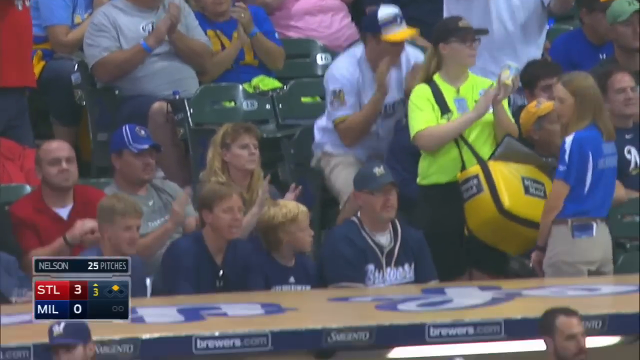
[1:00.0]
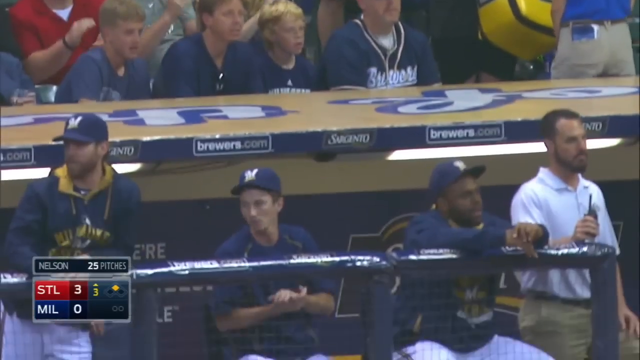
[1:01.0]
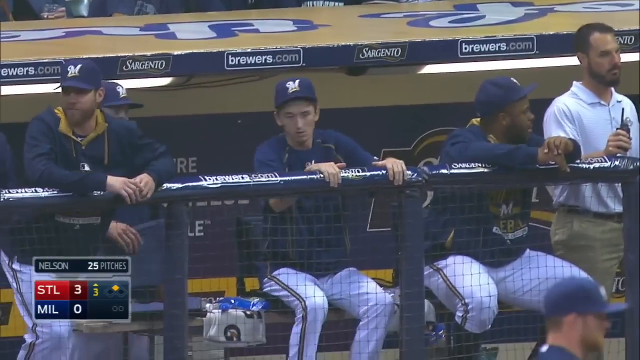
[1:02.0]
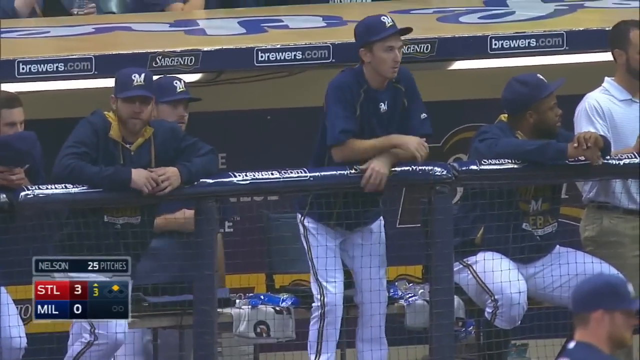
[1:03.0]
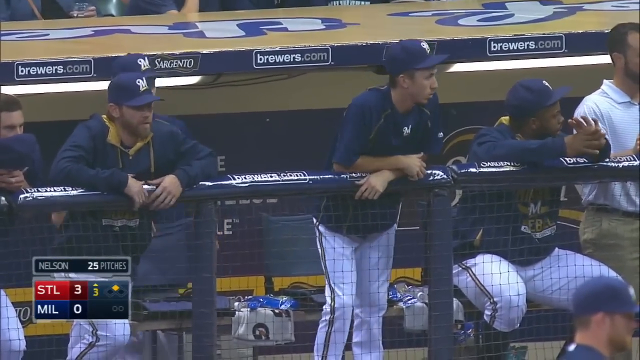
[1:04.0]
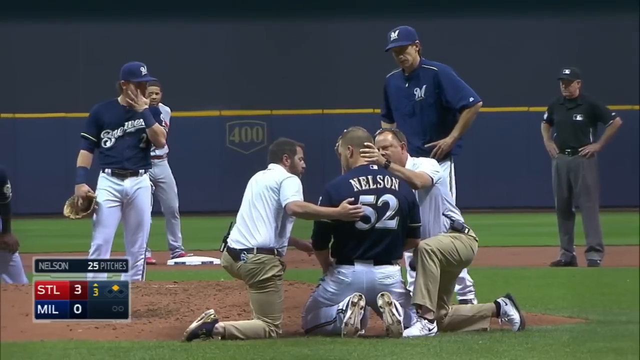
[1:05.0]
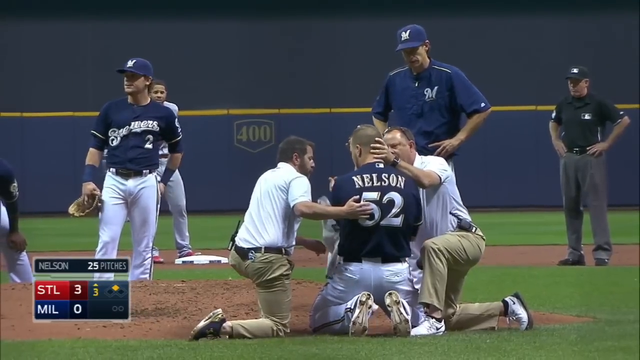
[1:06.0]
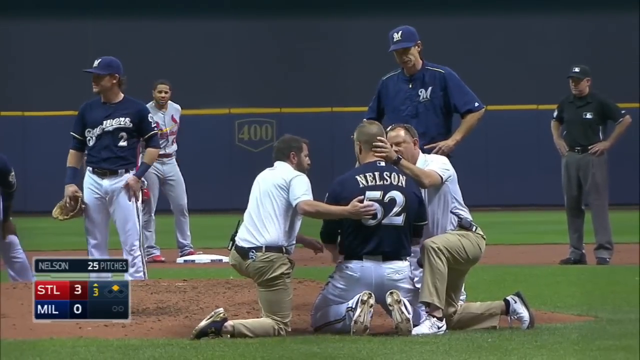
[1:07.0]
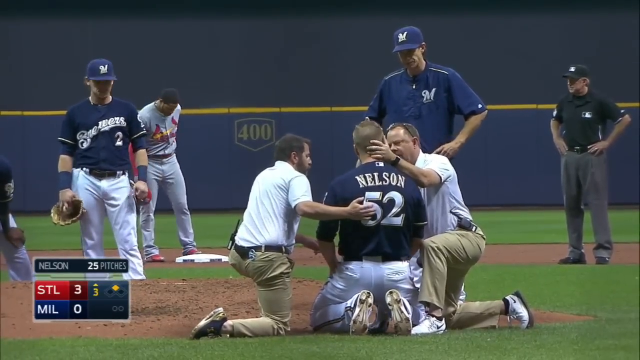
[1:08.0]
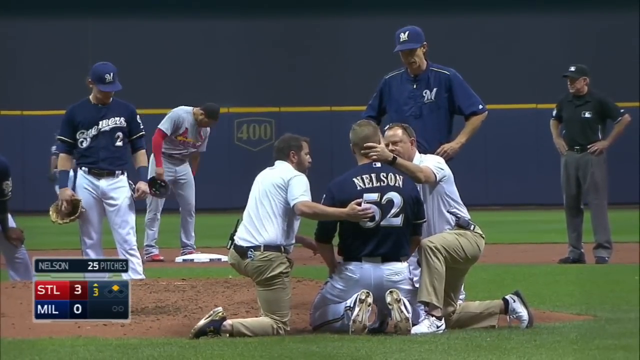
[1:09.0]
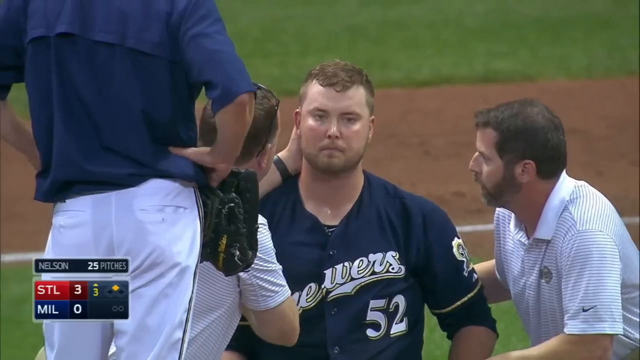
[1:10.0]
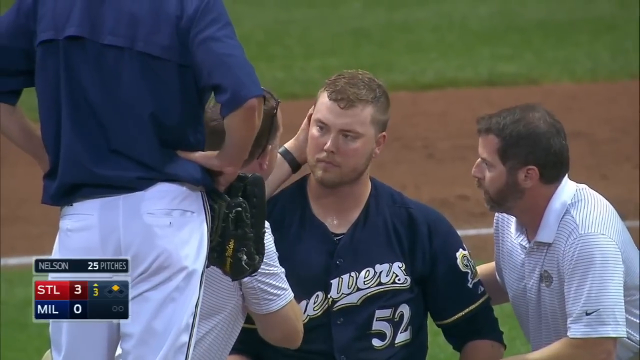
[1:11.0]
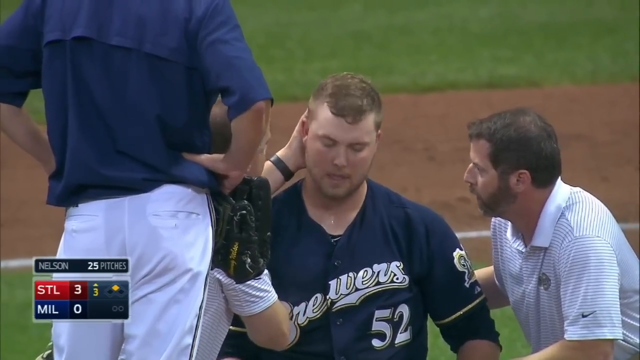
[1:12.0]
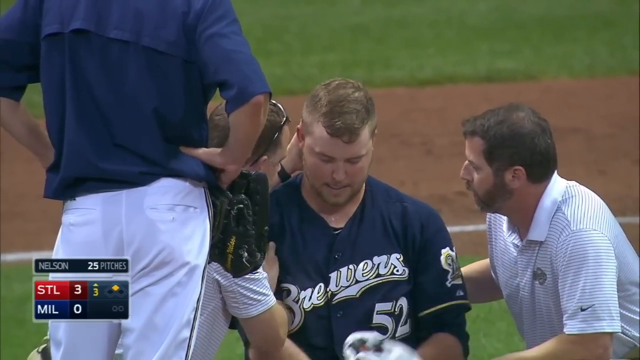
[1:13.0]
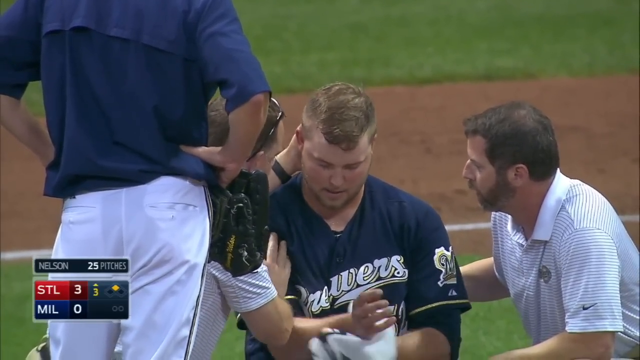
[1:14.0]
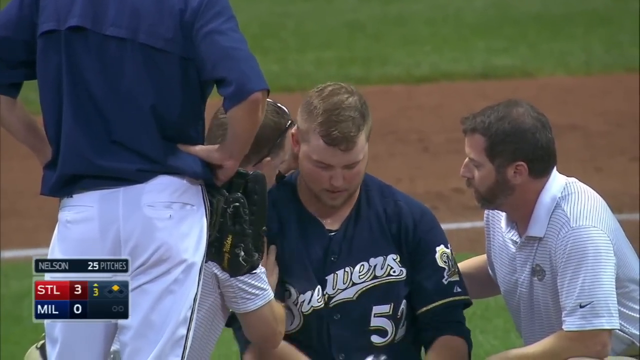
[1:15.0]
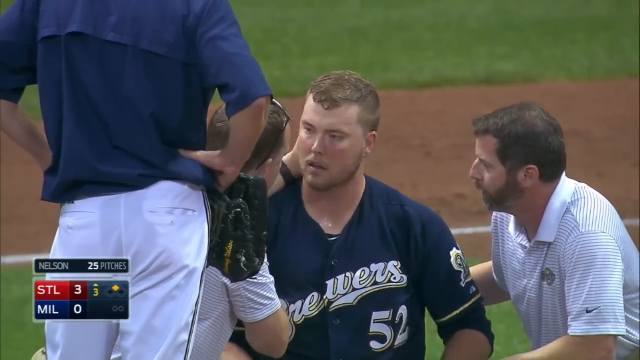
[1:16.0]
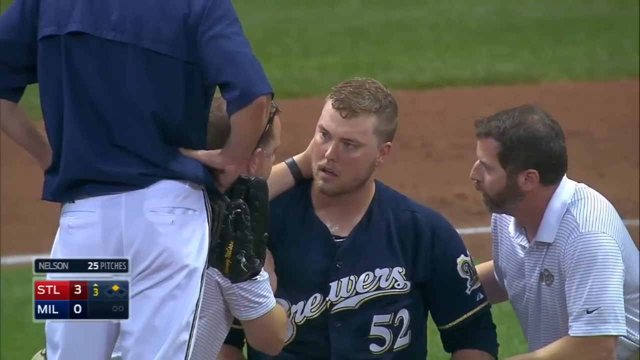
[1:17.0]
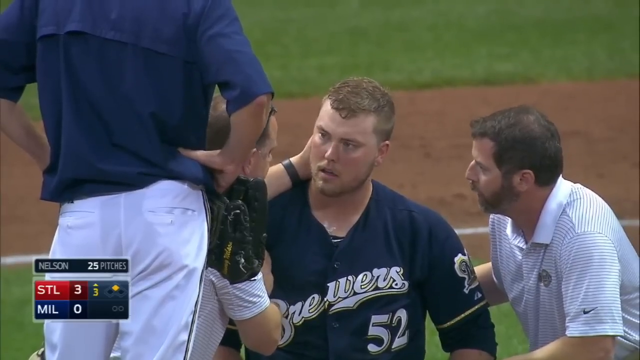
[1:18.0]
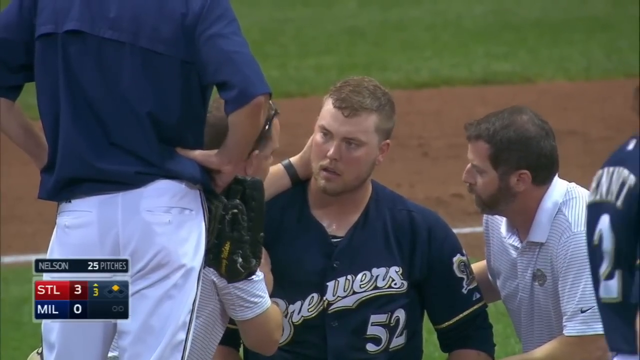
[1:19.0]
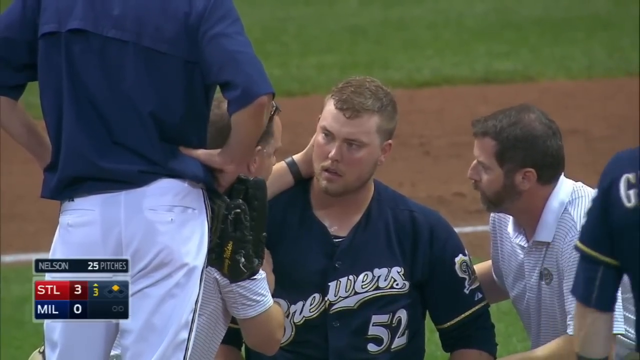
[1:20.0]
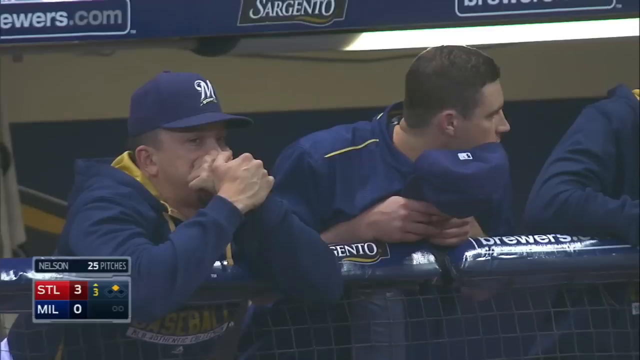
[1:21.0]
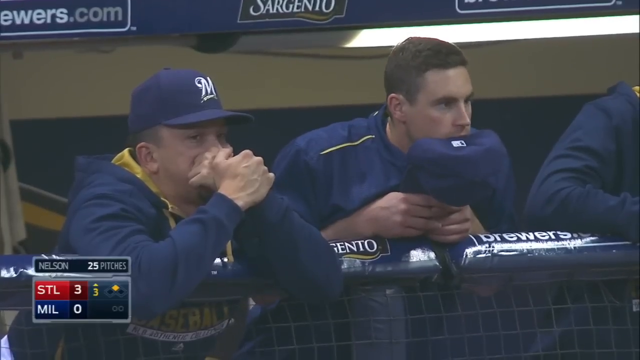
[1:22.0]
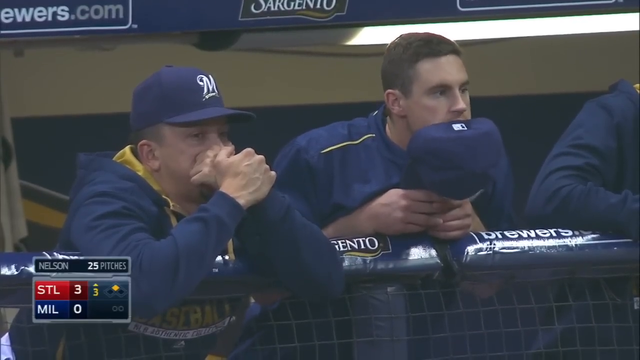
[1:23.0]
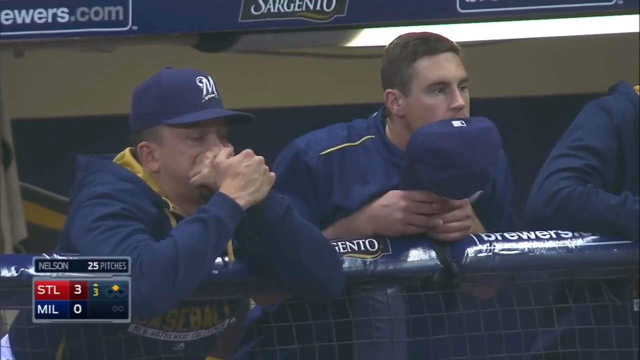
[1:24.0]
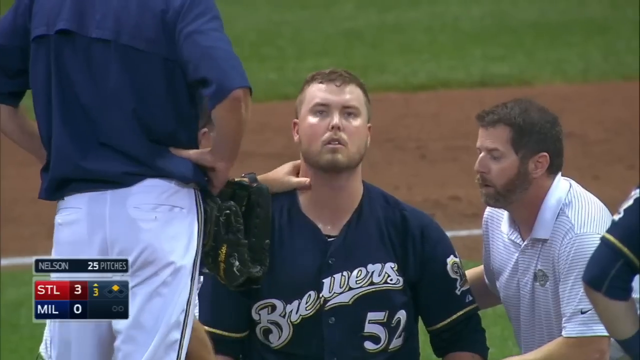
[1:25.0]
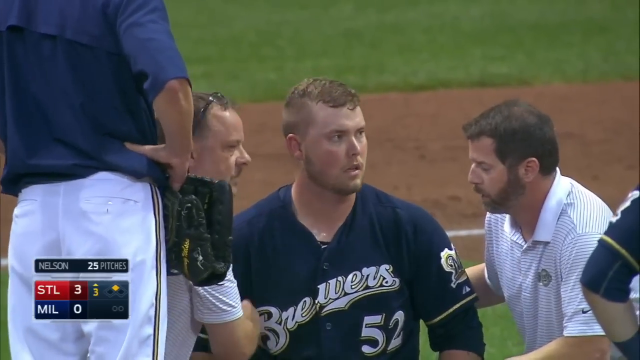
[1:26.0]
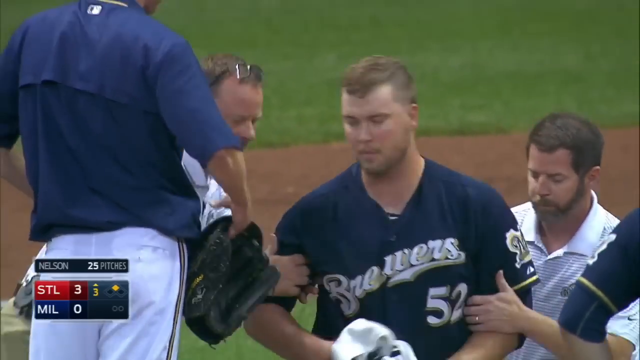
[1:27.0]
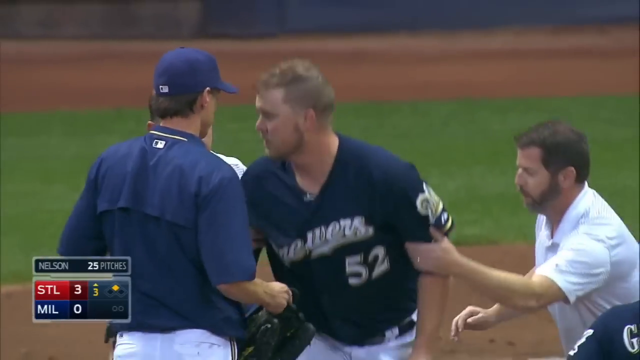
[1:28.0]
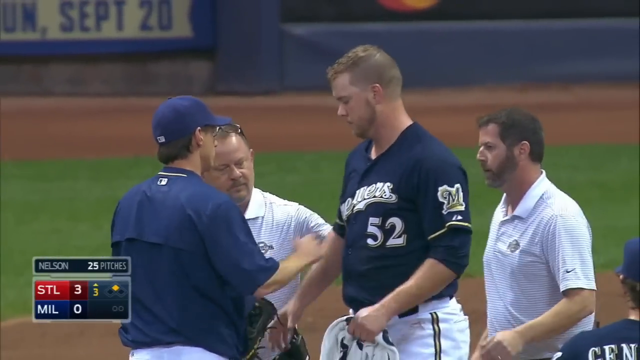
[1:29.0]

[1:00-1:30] Fans behind one of the dugouts are shown; a concession worker in a fluorescent yellow shirt stands and claps as Nelson rises to his knees. The camera pans down into the Milwaukee dugout, where the players look relieved. Nelson is still kneeling, facing away from the camera, with his spikes visible and a trainer on either side of him. The trainer on his left holds his right hand on the number five on Nelson's back, and the trainer on his right holds his left hand on the back of Nelson's head, while umpires, coaches and players mill around looking concerned. The trainer on the right speaks to Nelson, and then Nelson's face is shown for the first time: he has sandy hair and a small goatee and looks a bit dazed, but his eyes track the trainer to his right, so he seems conscious and reasonably lucid. He takes a towel and wipes his hand, and speaks with the trainer on his right, who talks to him with concern. A shot of the dugout shows more concerned players. Nelson's cheeks are flushed, and he is helped to his feet.